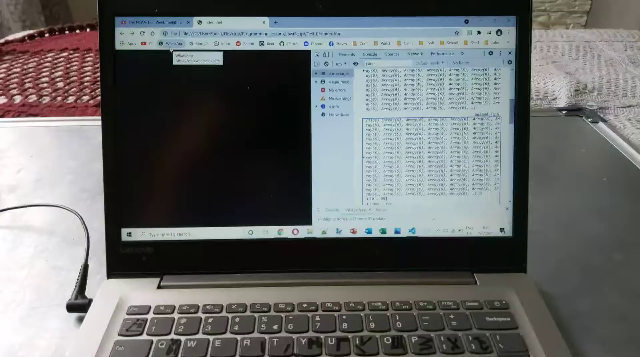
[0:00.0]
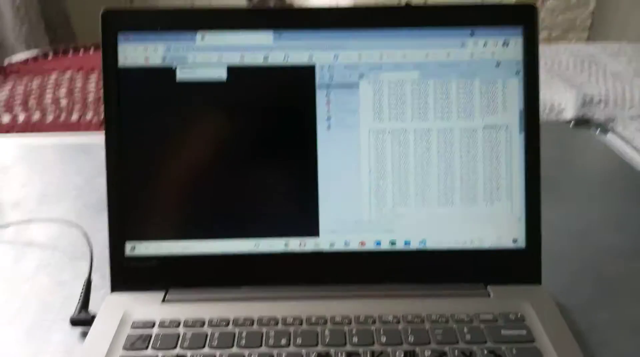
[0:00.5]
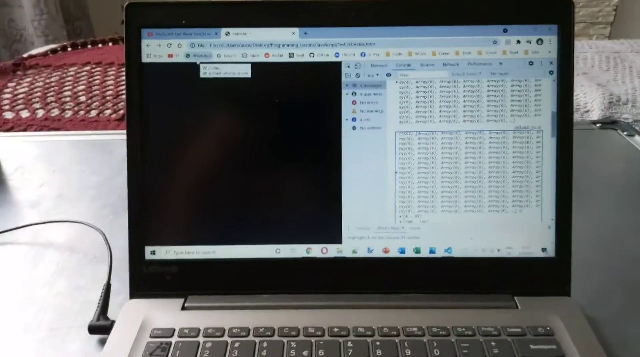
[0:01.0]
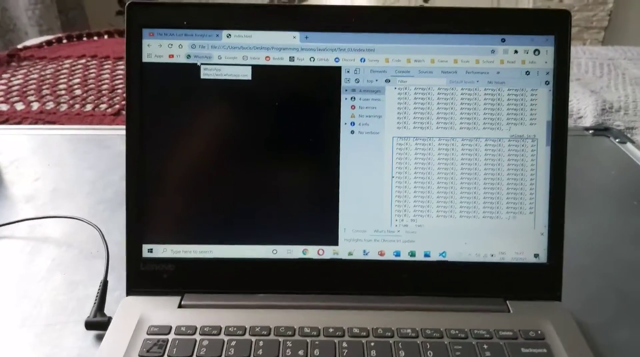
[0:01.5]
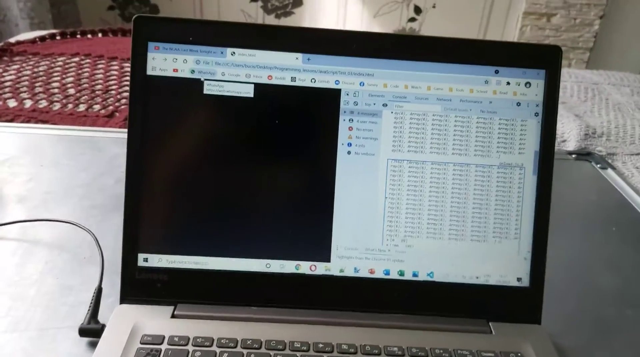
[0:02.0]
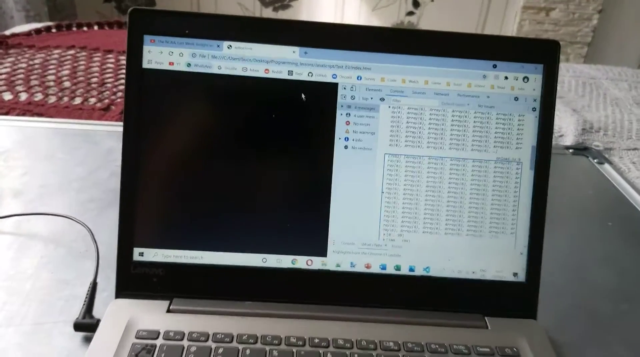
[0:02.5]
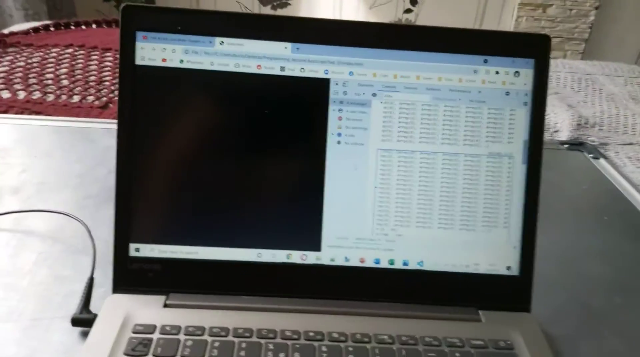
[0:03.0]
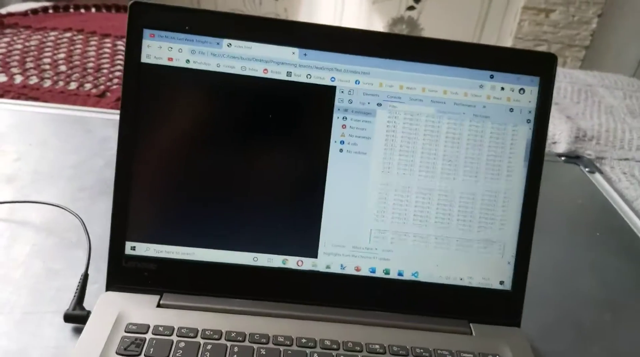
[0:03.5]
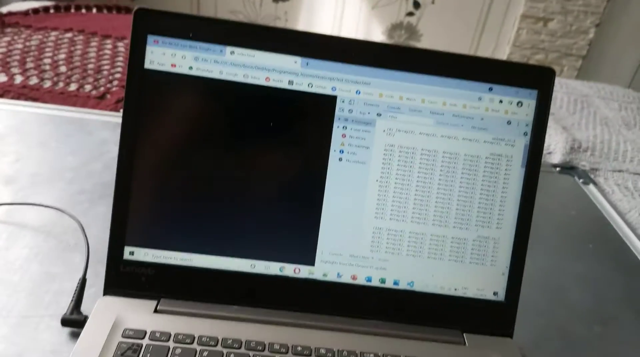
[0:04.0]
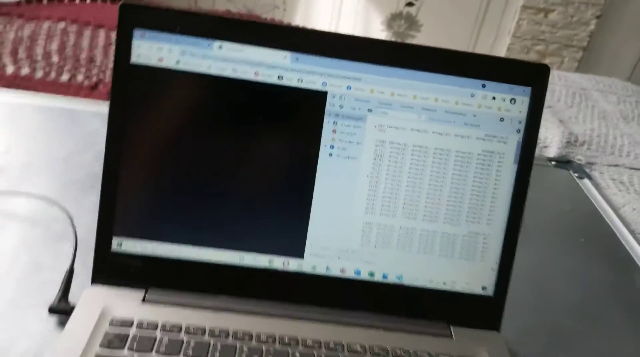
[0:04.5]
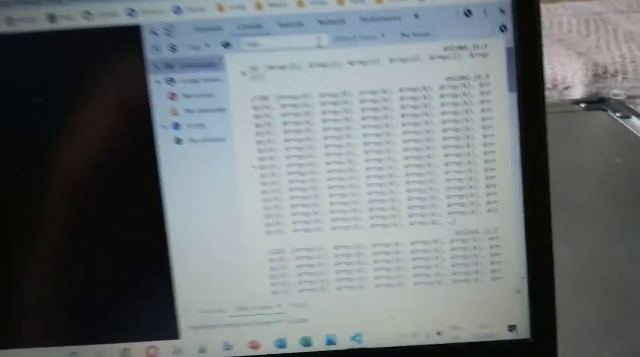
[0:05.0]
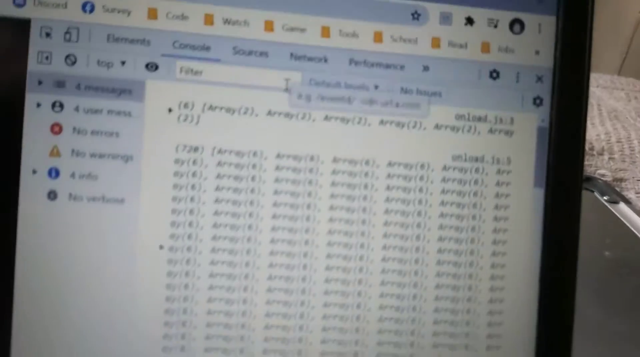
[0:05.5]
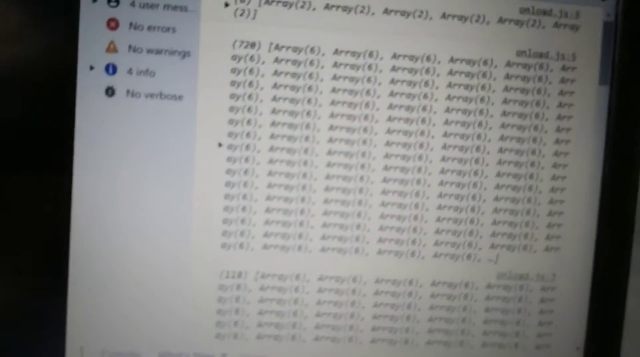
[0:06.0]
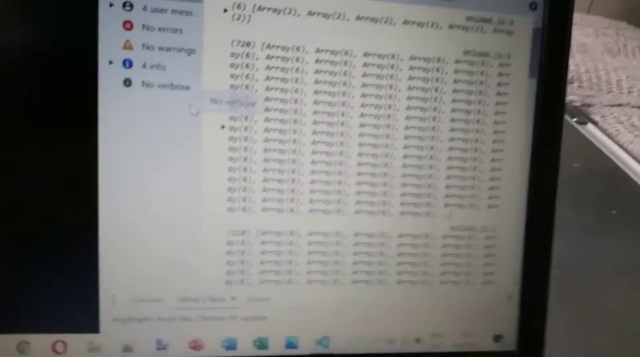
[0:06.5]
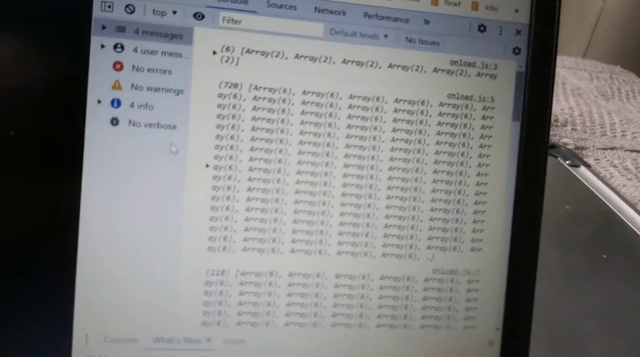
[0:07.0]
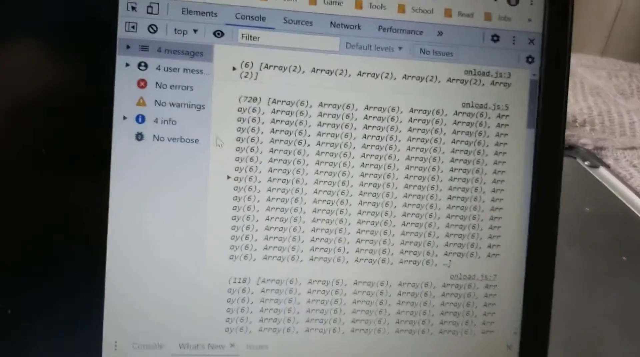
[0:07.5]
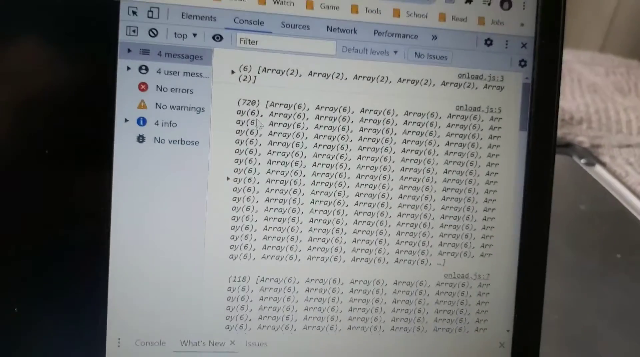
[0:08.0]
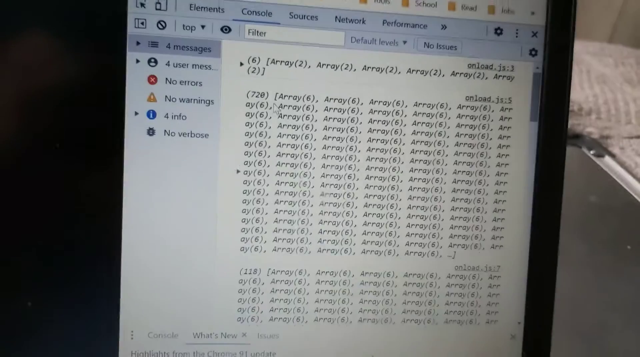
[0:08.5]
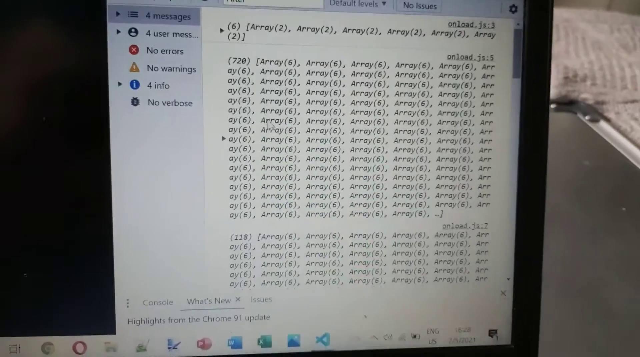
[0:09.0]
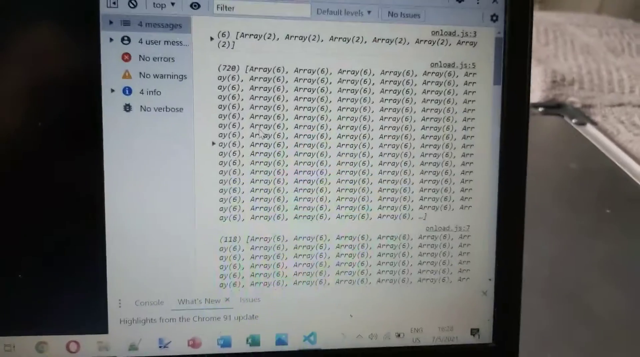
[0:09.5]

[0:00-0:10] A computer monitor is seen in what might be a bedroom or living room. In the background there are light wood walls and what looks like a white blanket. The monitor, suddenly seen zoomed up close, is filled with information, mostly scrolling columns that cannot be read. On the right, the word "array" appears over and over with numeric information beside it. The left side of the monitor is primarily black, and on the left it says "no errors". The mouse moves around on the screen, and the camera is somewhat shaky as it focuses in on the computer screen.